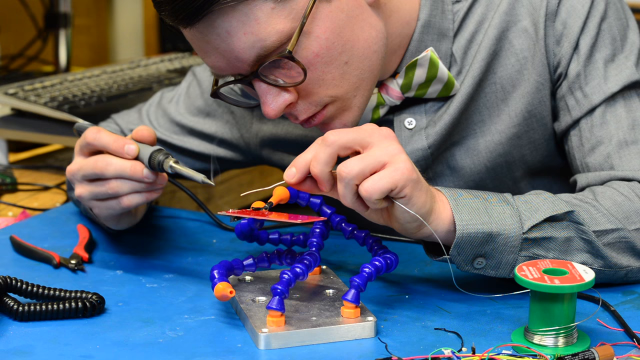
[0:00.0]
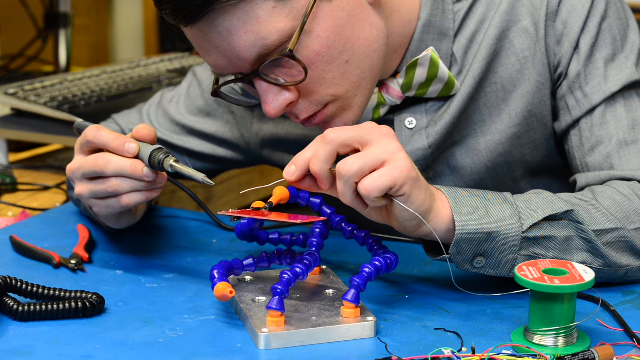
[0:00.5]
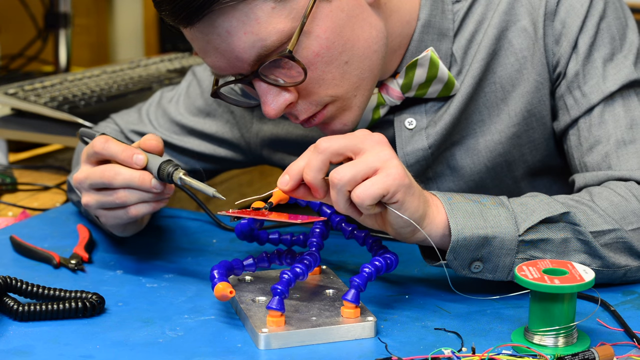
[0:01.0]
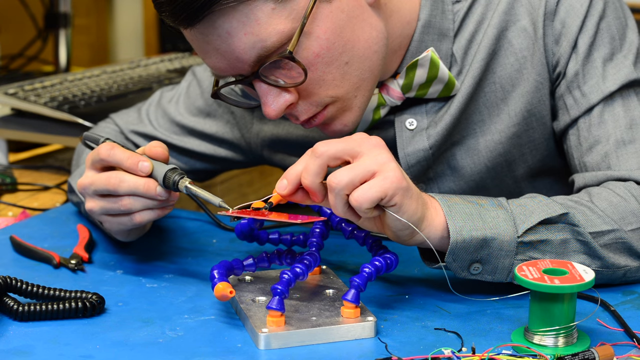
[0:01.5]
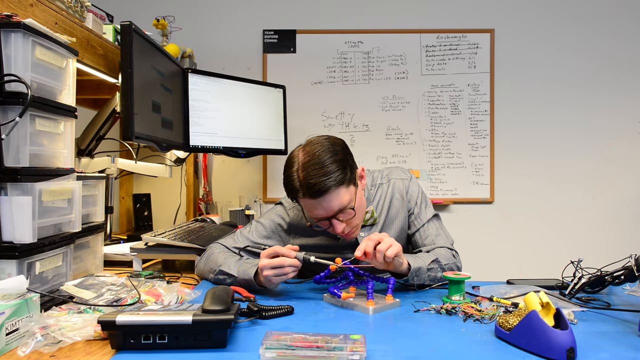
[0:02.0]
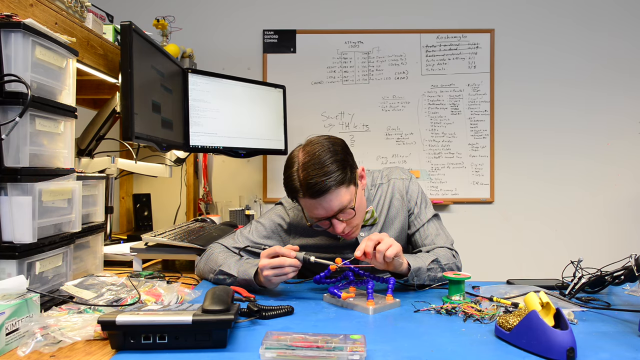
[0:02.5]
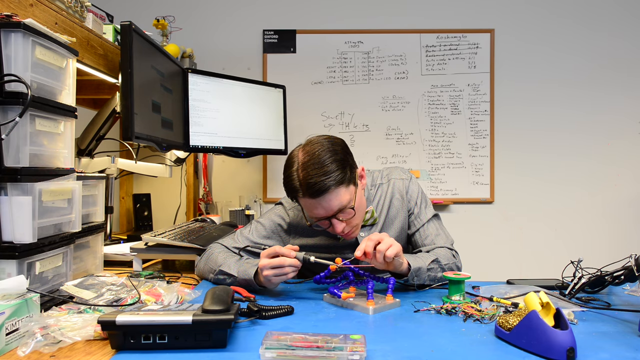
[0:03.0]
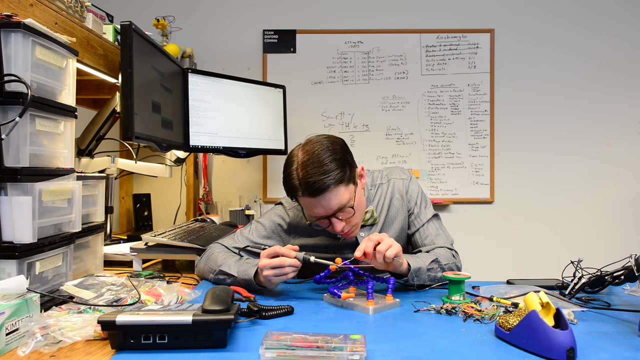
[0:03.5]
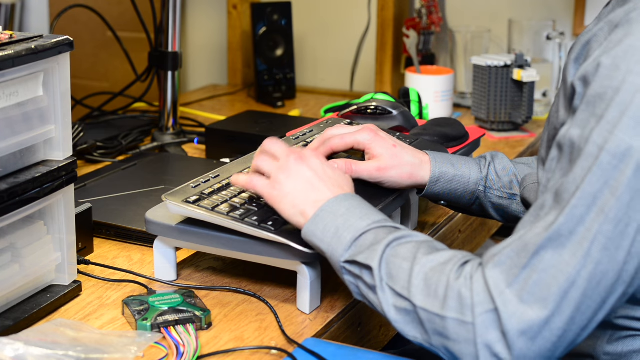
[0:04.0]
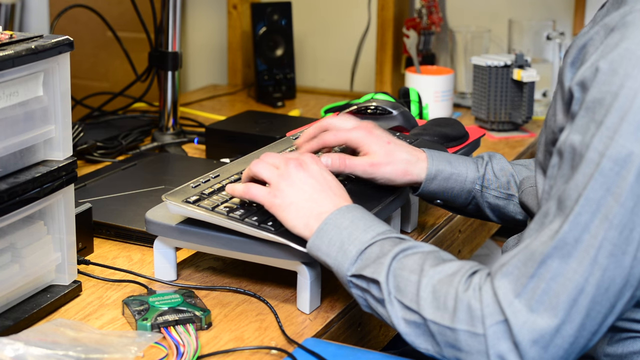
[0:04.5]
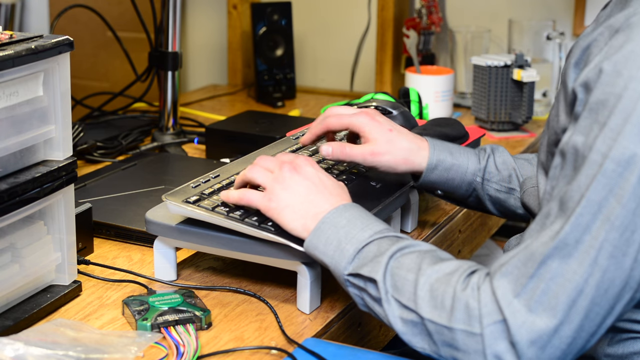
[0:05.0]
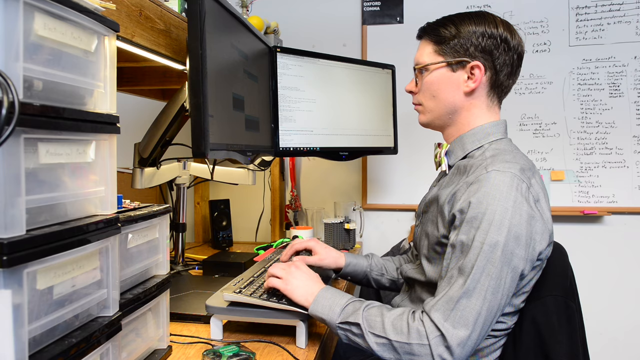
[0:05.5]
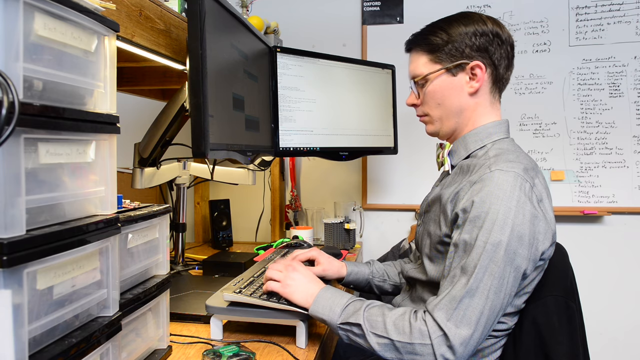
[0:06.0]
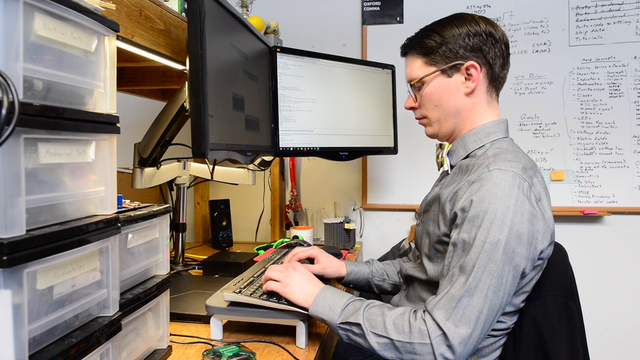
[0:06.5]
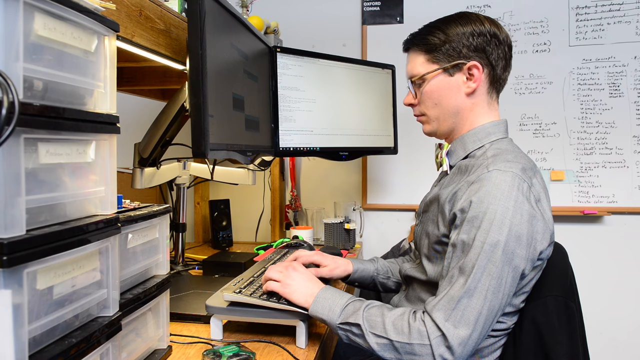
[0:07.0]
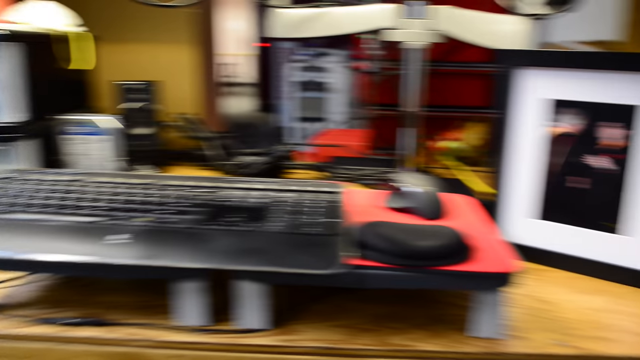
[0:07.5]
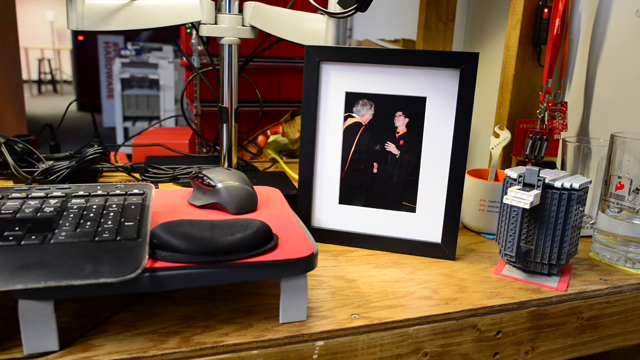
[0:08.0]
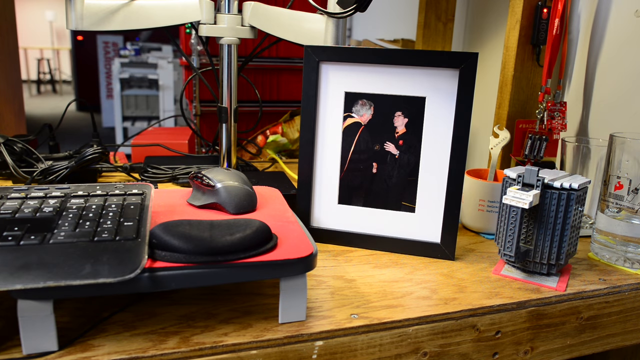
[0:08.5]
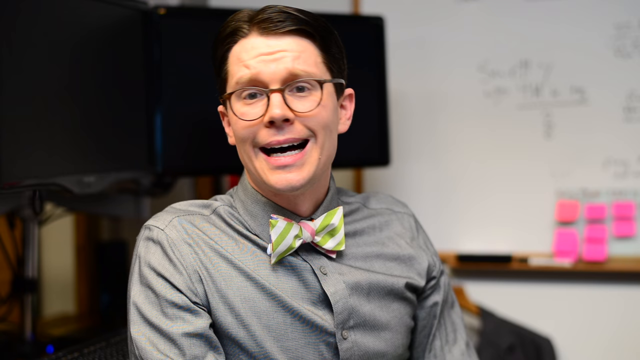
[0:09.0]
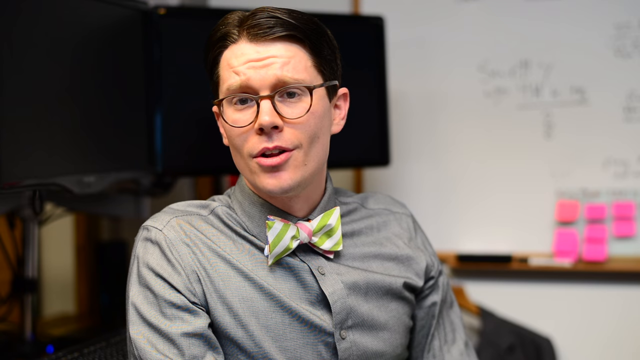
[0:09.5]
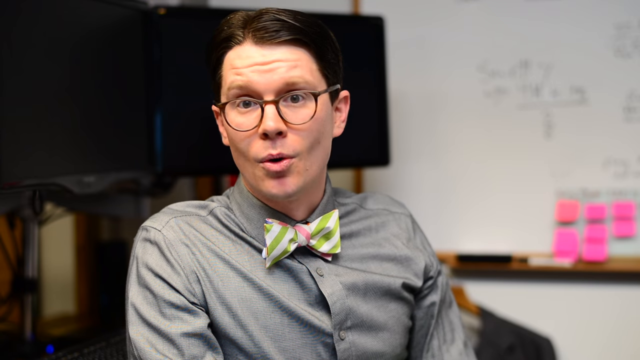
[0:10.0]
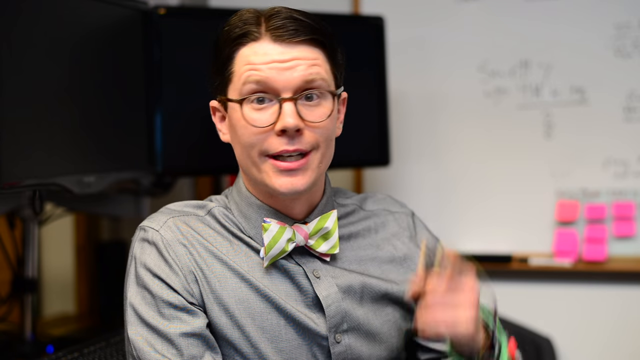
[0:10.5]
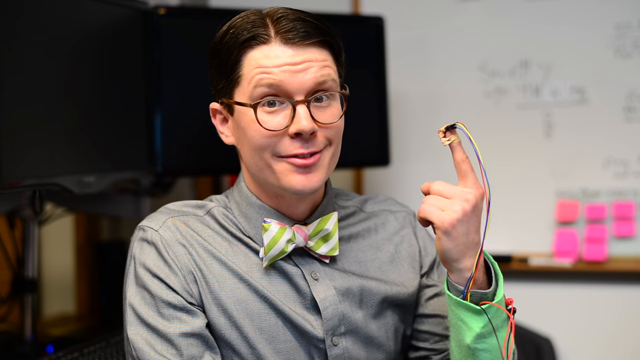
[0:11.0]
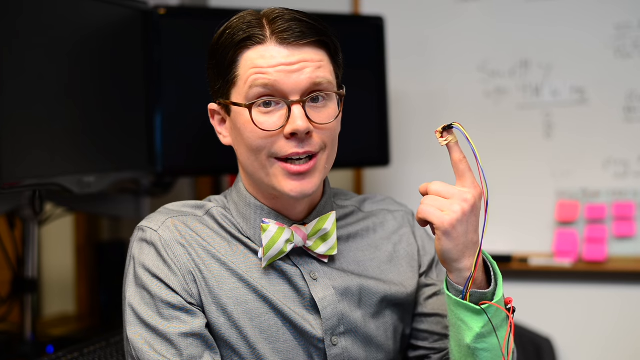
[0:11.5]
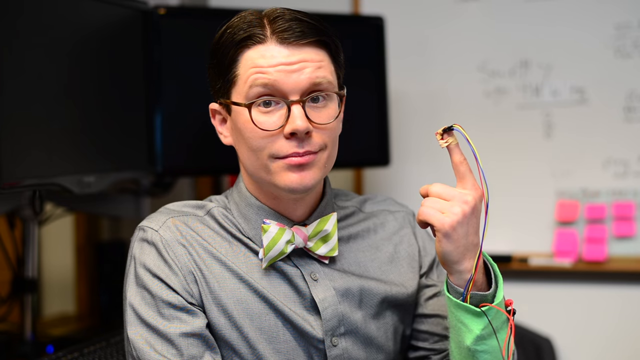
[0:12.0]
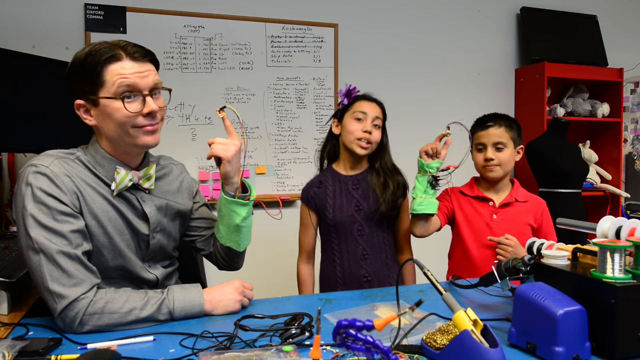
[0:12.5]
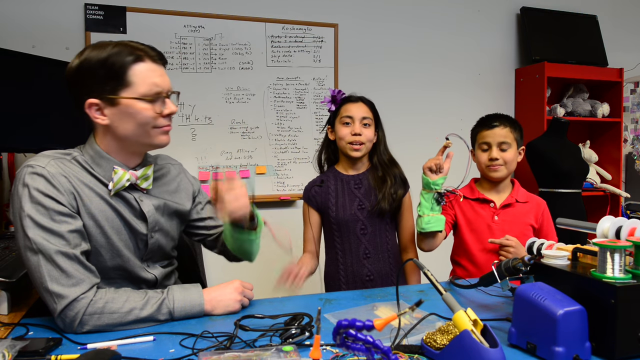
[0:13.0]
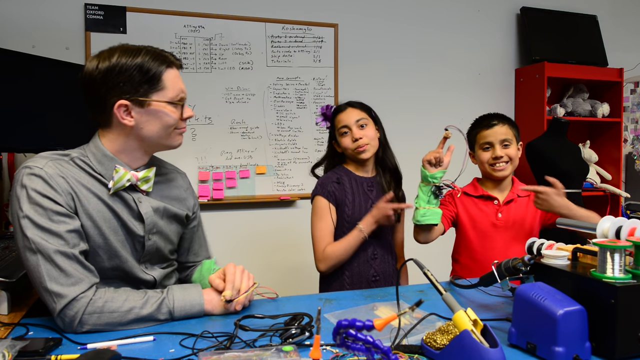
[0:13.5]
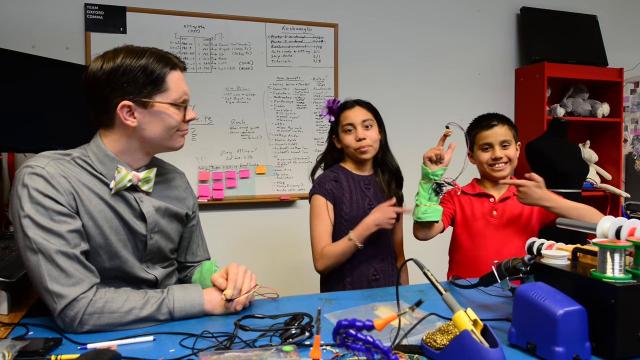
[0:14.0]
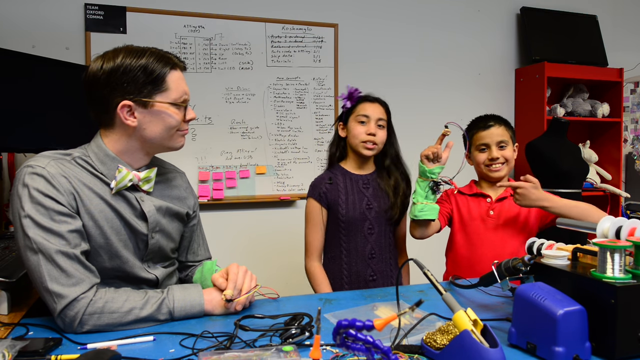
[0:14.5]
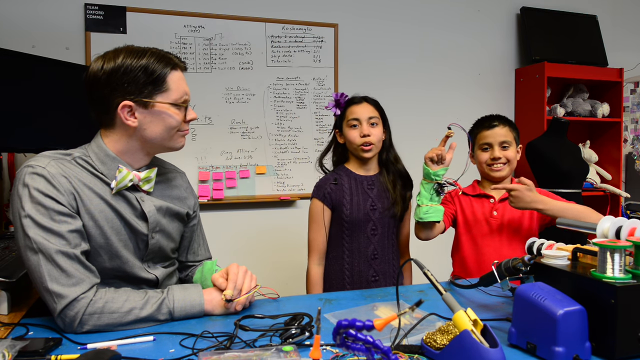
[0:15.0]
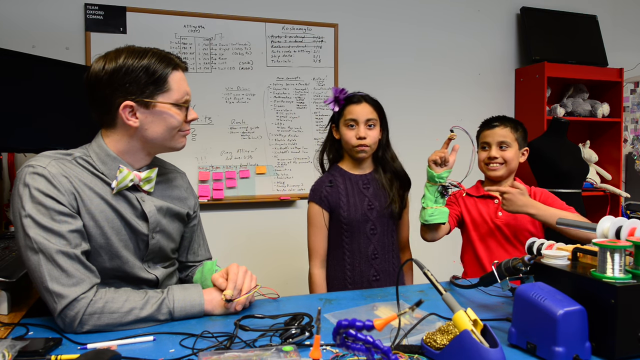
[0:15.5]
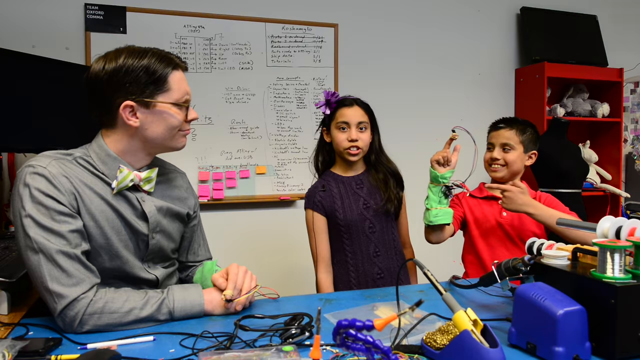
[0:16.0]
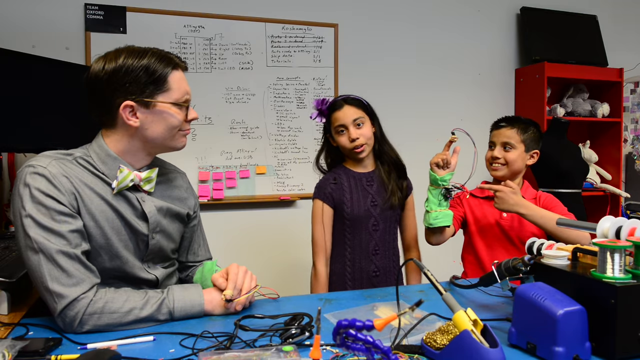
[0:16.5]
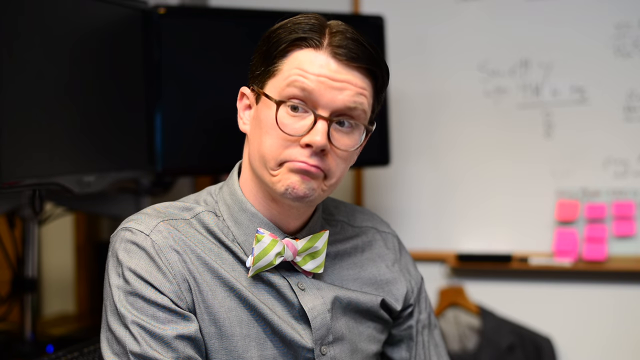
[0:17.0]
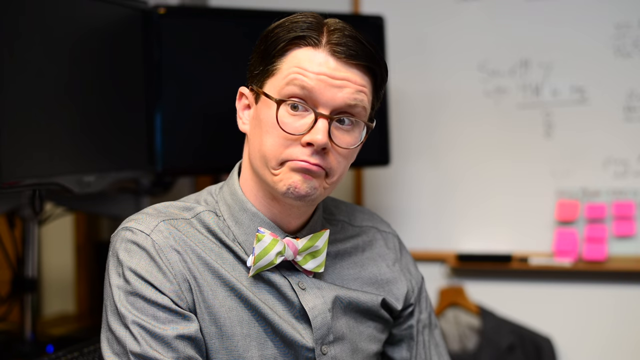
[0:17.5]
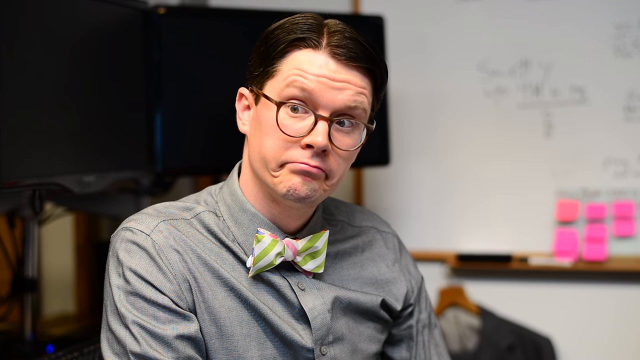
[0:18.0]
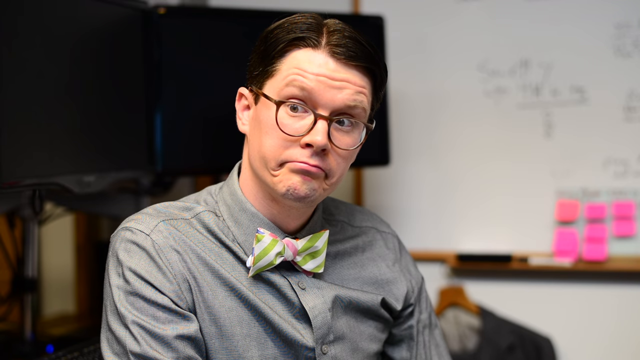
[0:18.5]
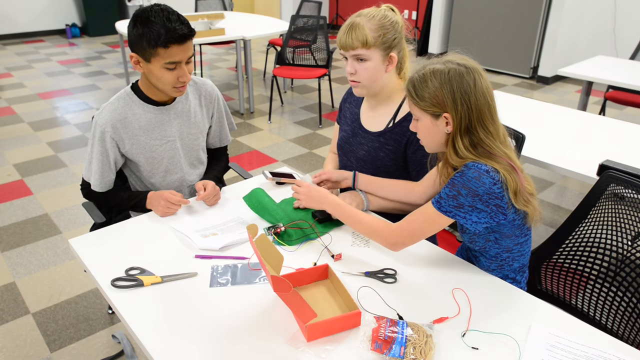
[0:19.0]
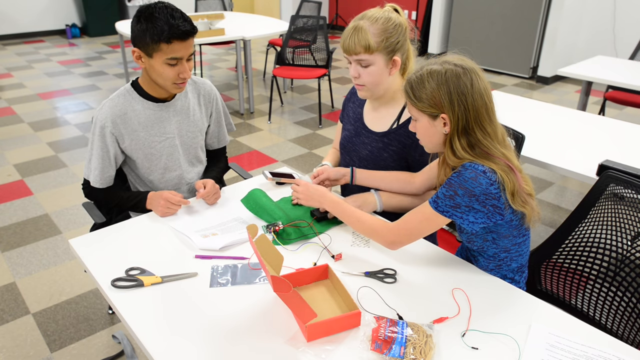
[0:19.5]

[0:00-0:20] A man in a grey shirt and a bowtie appears in a scene where something blue, on a stand, is being soldered on a table. Several machines are on the table. The room contains several keyboards, monitors and CPUs, and there is a whiteboard. The man types something on a keyboard, and a picture is placed on the table. Later the man is sitting down, and some kids have something on their hands: a connection is made from something installed on the hand, with a wire that goes around and touches the tips of the fingers. The kids show what is on their fingers, with a whiteboard in the background.